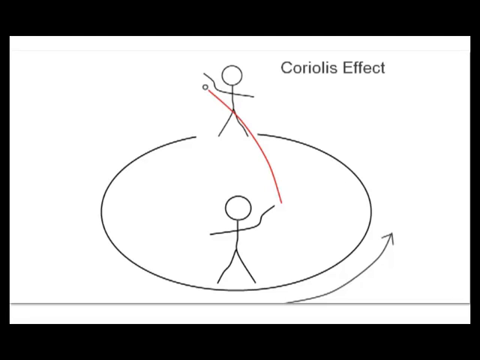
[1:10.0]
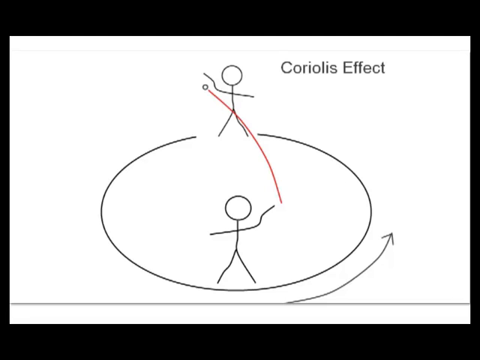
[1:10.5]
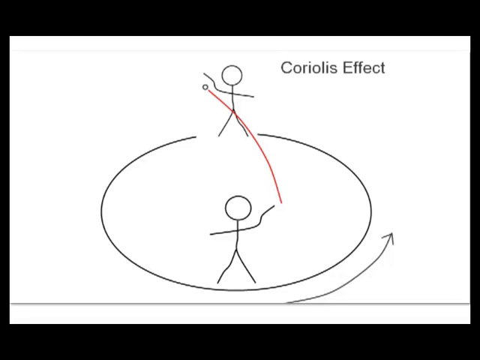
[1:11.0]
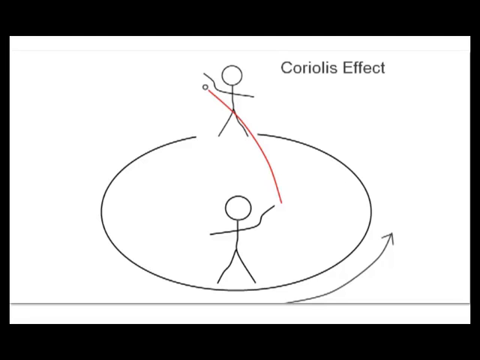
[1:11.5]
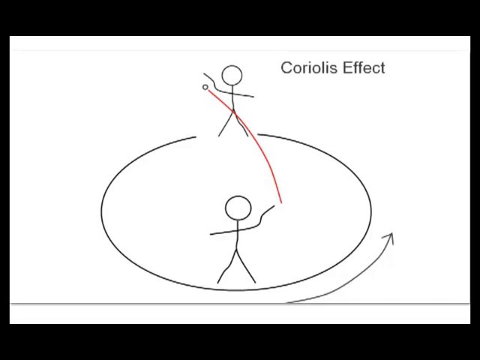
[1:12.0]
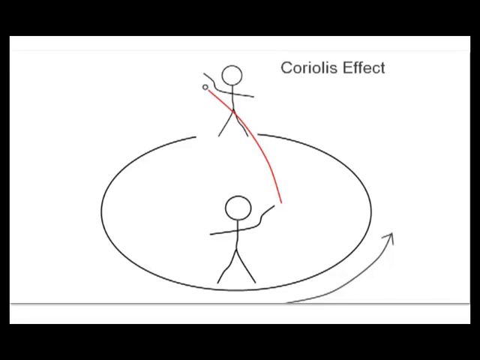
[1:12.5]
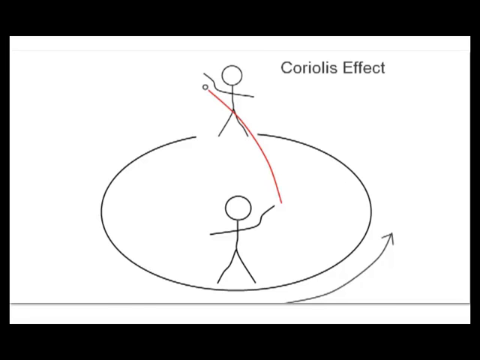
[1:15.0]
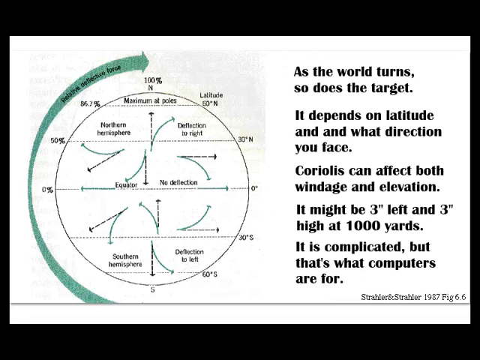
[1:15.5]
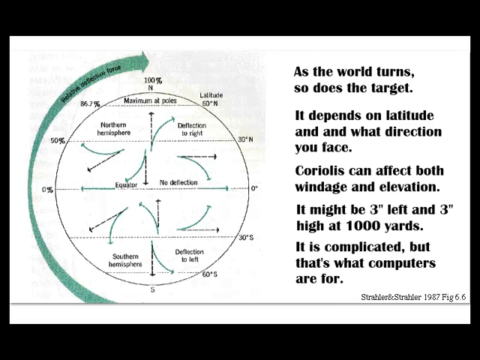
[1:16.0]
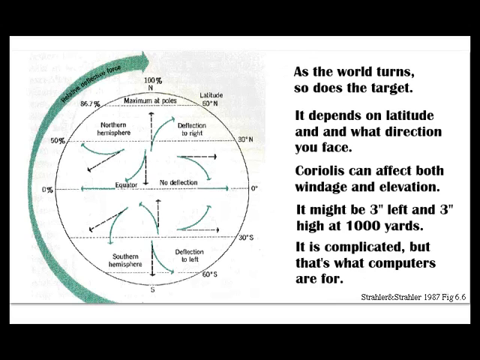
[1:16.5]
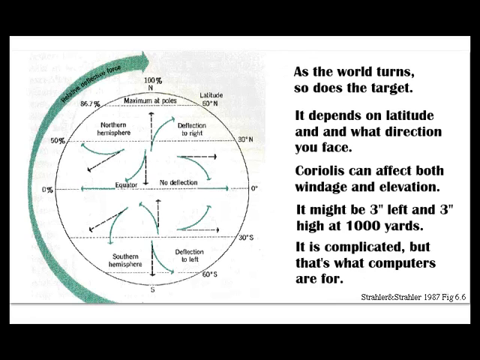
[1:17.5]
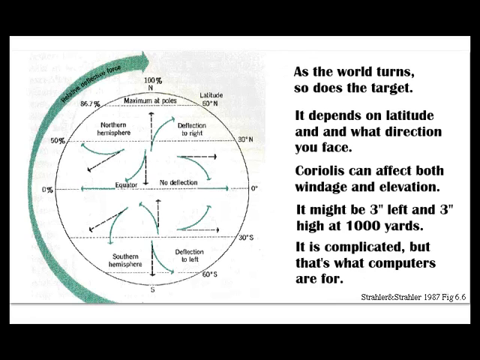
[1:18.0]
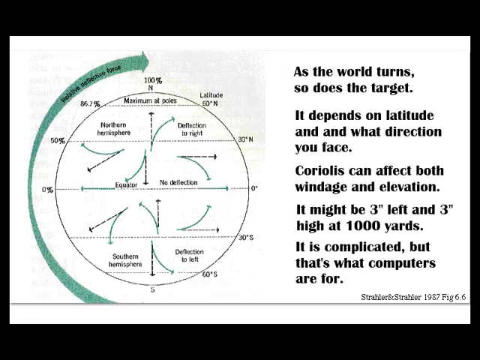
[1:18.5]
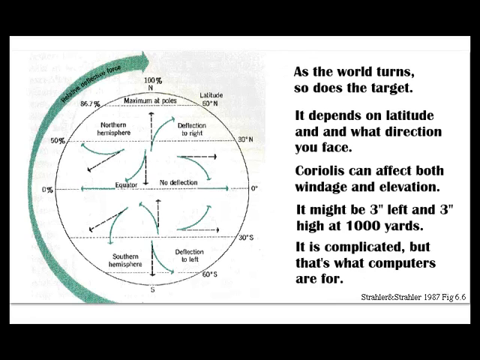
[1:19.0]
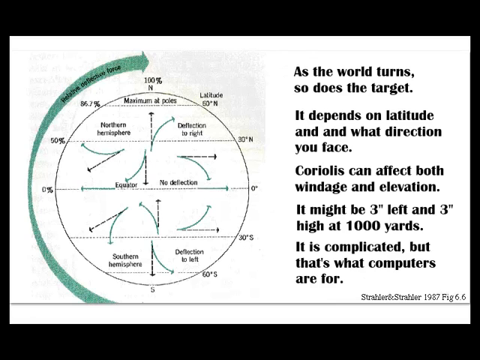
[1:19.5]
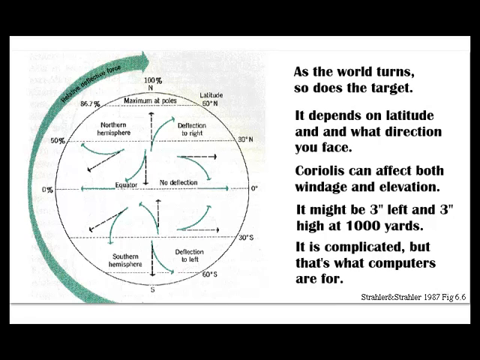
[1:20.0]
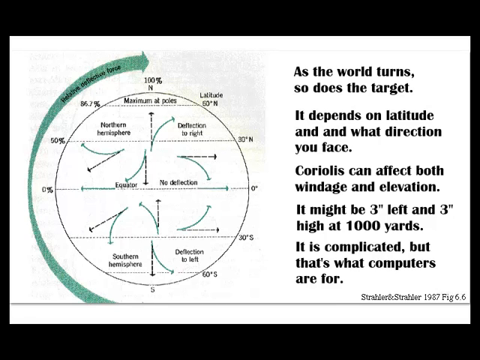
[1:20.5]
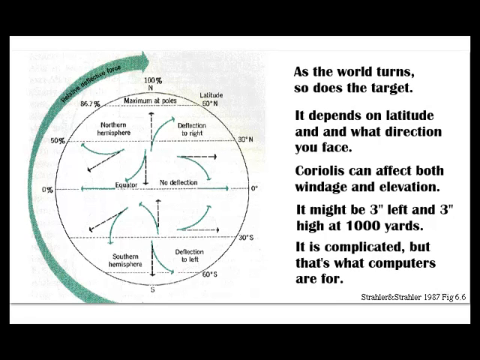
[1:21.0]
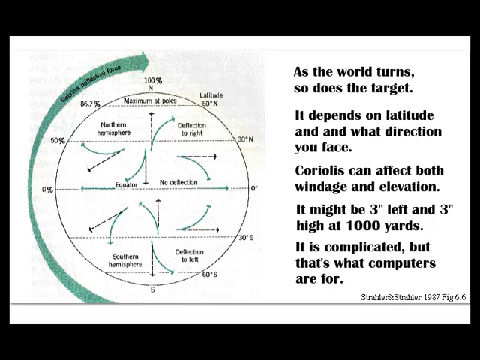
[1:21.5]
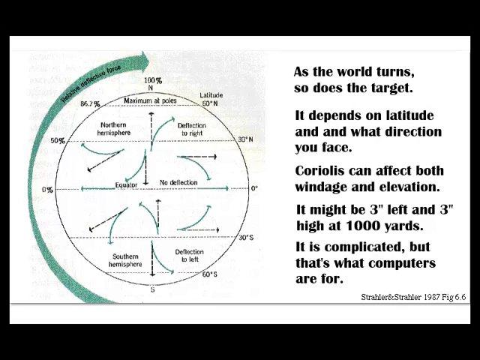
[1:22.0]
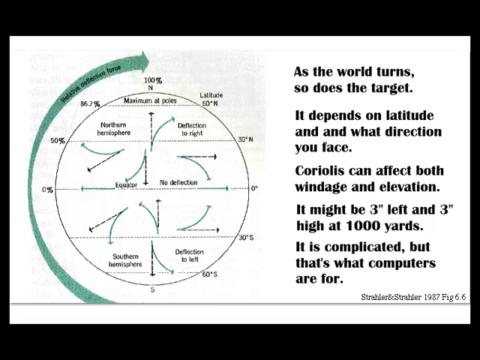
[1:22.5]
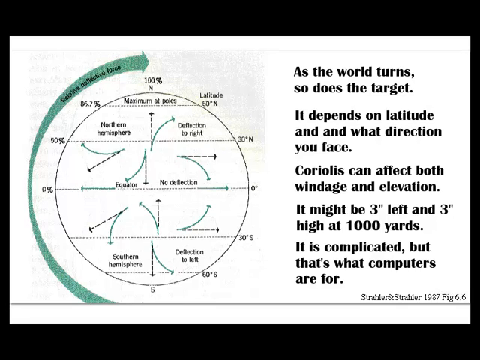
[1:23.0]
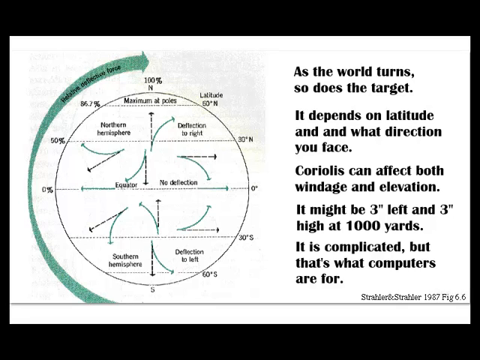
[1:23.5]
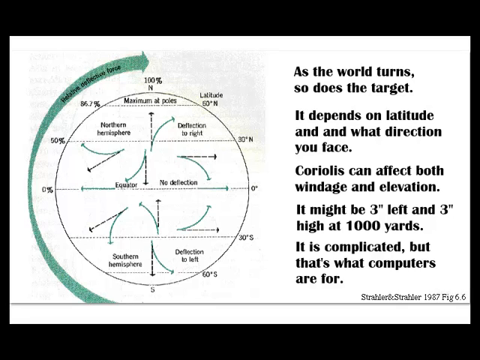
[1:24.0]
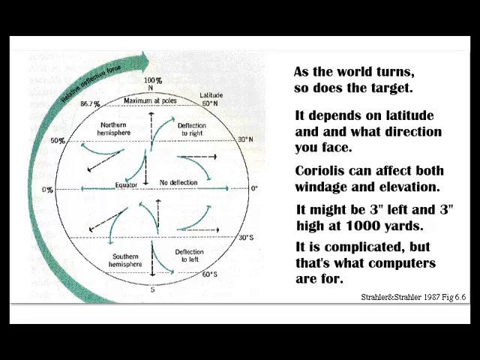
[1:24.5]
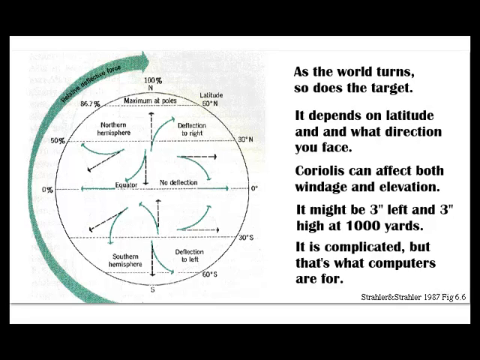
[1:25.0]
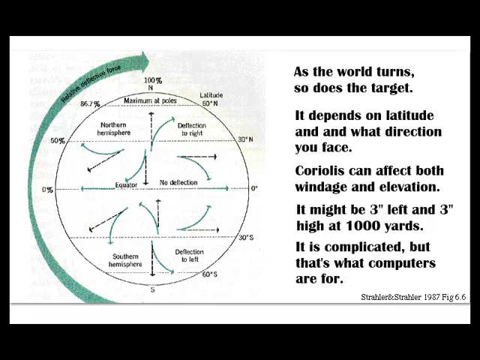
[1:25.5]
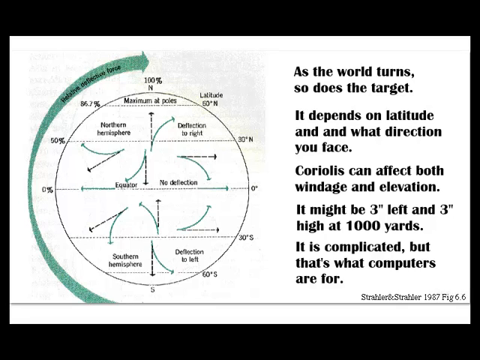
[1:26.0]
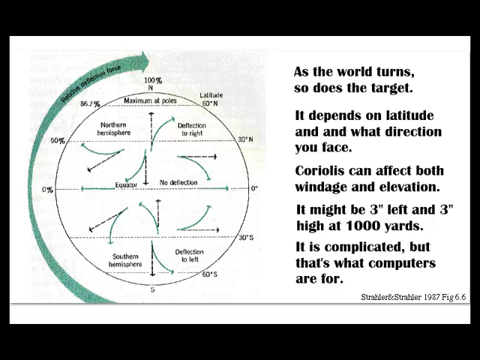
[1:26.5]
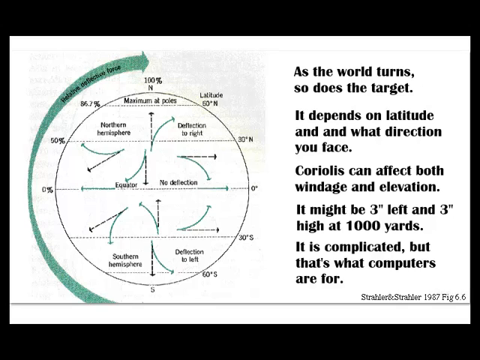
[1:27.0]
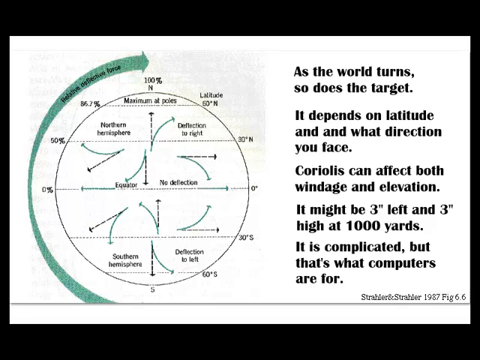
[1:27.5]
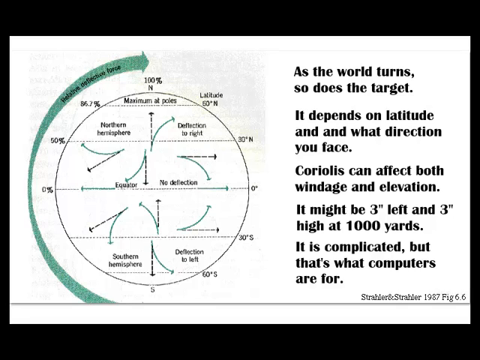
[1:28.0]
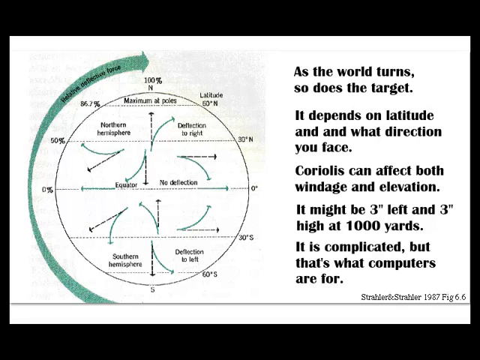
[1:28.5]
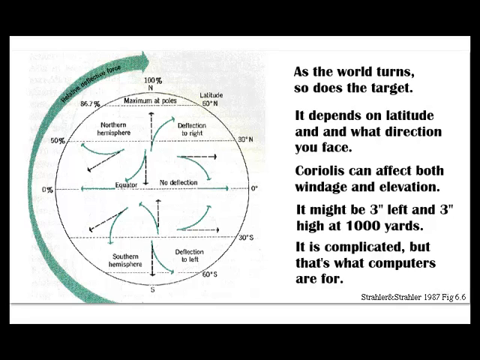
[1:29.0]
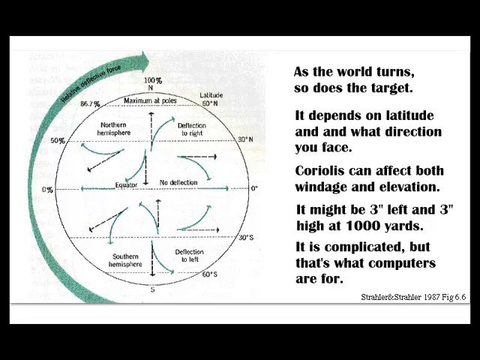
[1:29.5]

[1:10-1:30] A drawing shows what seem to be two stick figures standing in a circular motion, with a circle pointing from one stick figure to the other. Both have their arms put out. One holds a ball in his right hand, and the other seems to be throwing a ball; the stick figure on the north side is catching the ball. It seems to show the Coriolis effect, which is indicated on the right side. An arrow comes from the bottom of the screen going right to left, counterclockwise. The figures seem to be identical, though the head of the bottom one seems slightly bigger. The arms are completely identical, and the legs are also identical but mirrored.